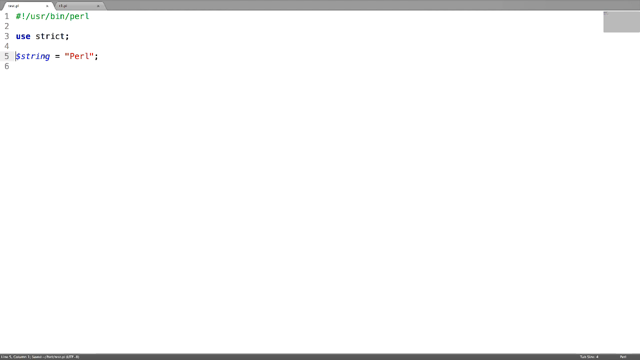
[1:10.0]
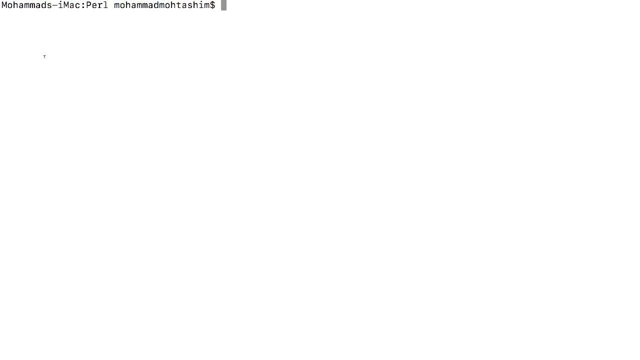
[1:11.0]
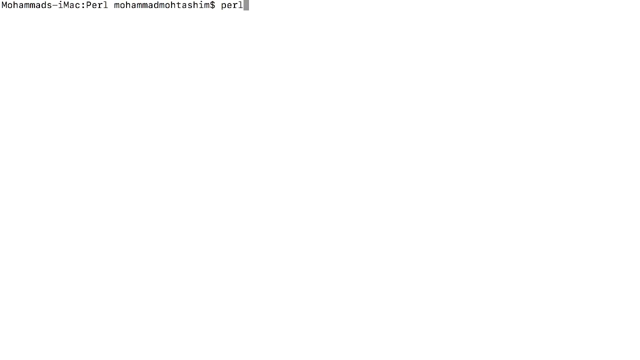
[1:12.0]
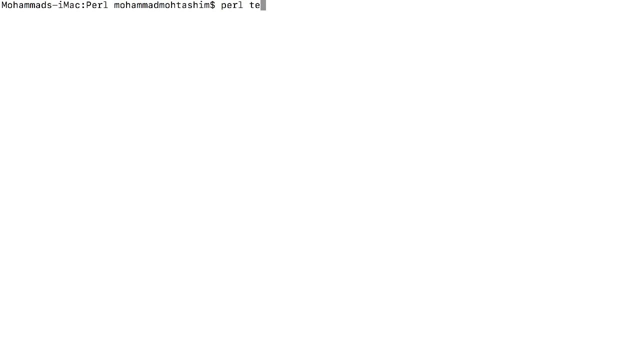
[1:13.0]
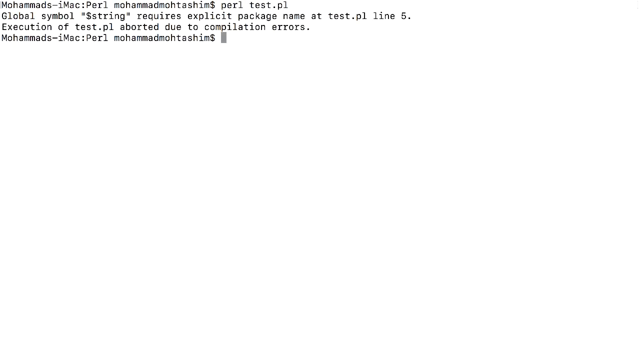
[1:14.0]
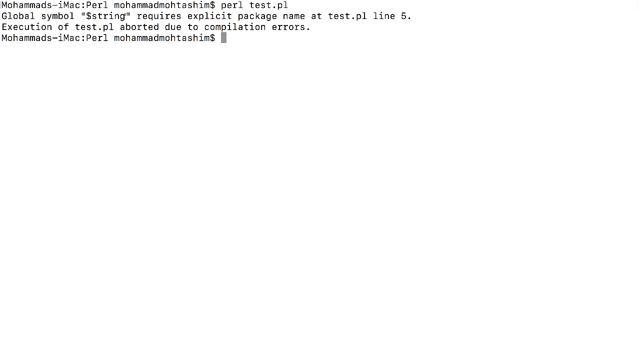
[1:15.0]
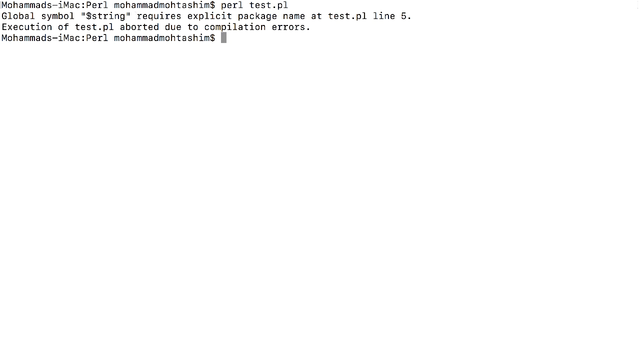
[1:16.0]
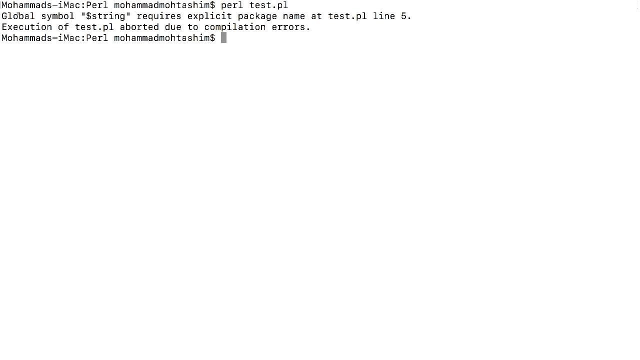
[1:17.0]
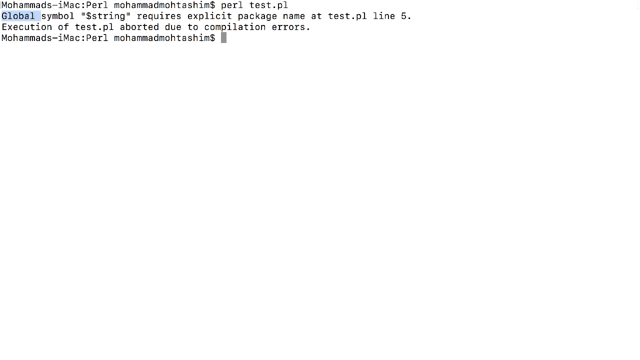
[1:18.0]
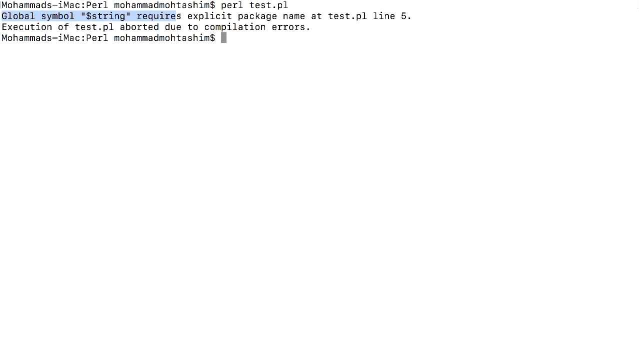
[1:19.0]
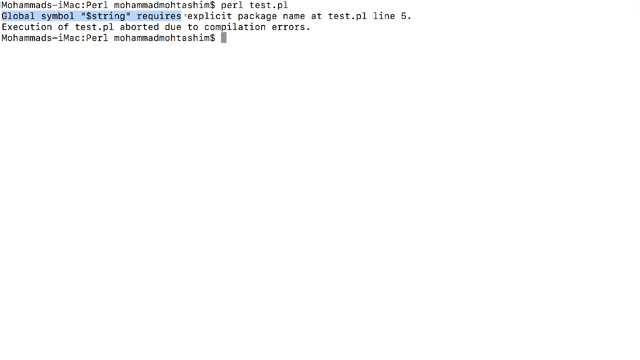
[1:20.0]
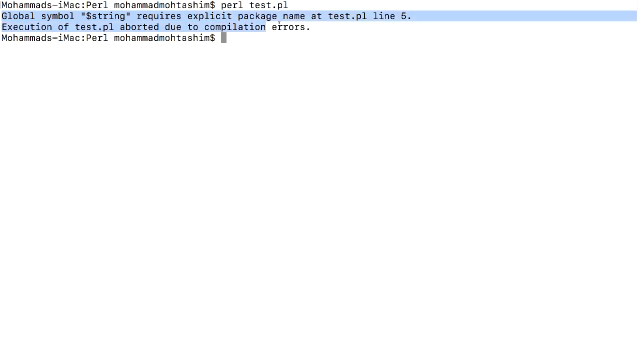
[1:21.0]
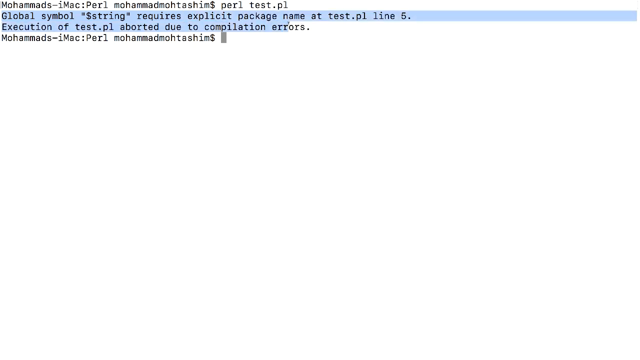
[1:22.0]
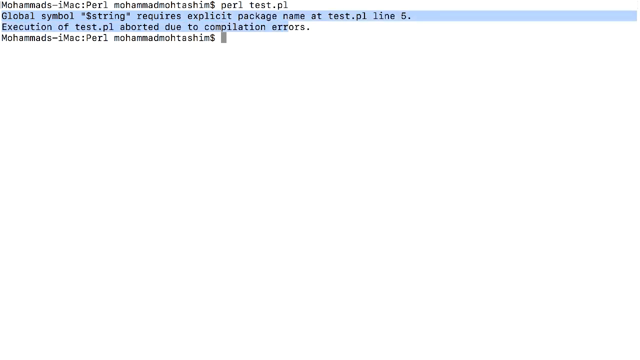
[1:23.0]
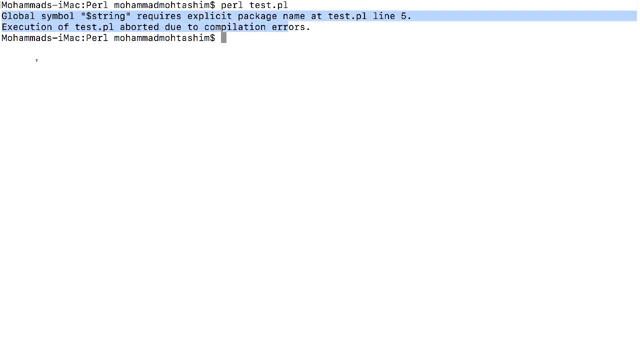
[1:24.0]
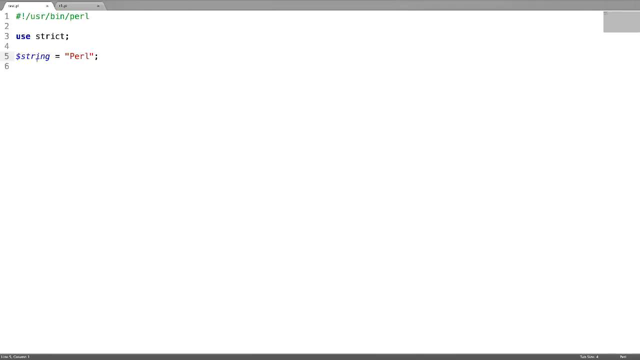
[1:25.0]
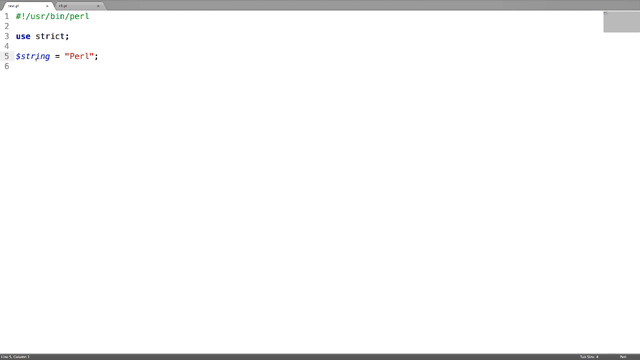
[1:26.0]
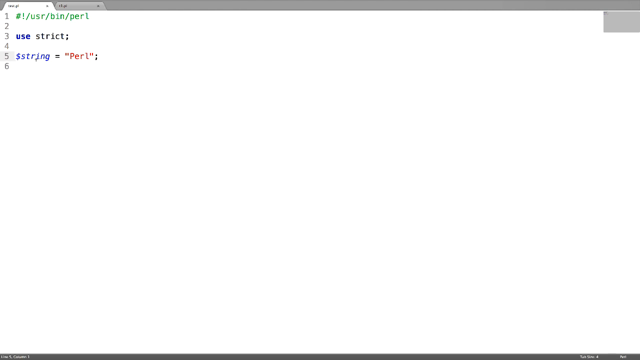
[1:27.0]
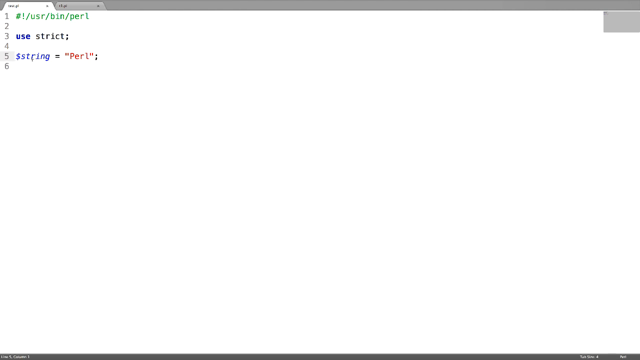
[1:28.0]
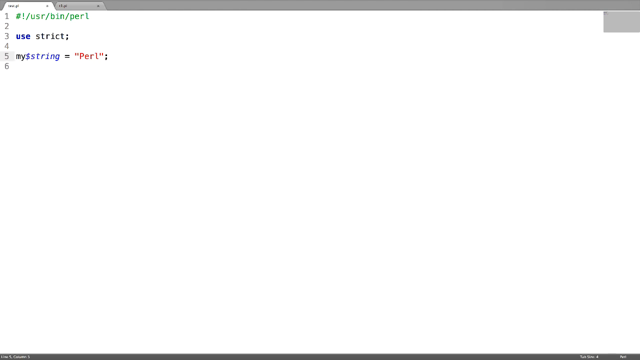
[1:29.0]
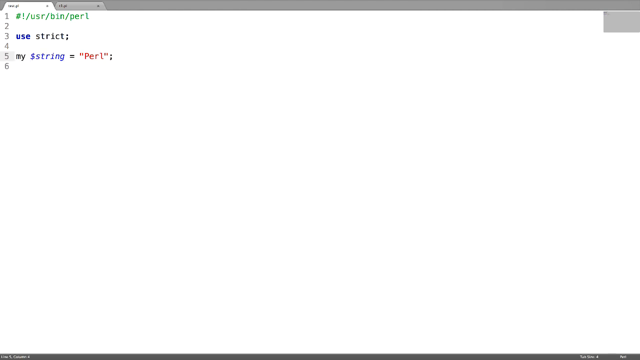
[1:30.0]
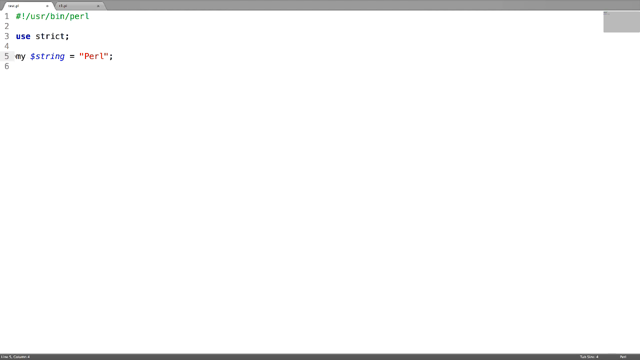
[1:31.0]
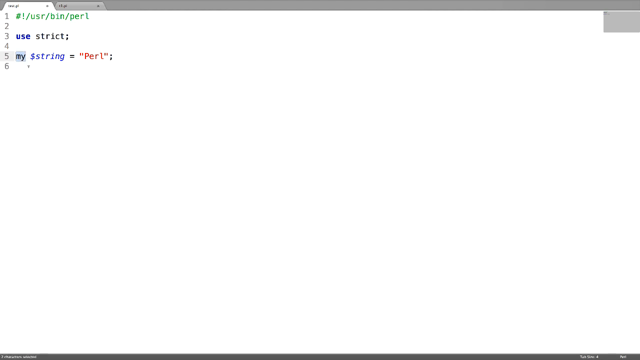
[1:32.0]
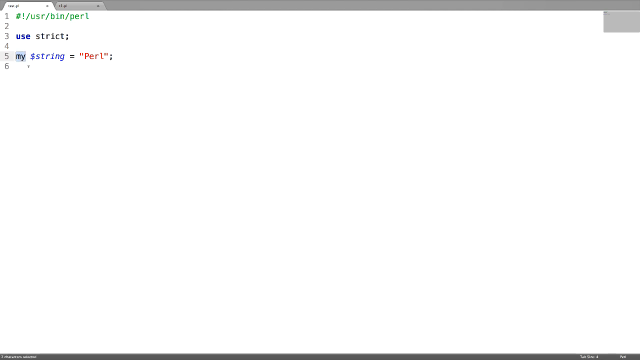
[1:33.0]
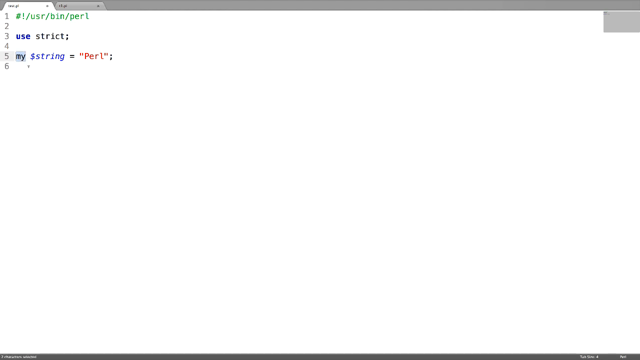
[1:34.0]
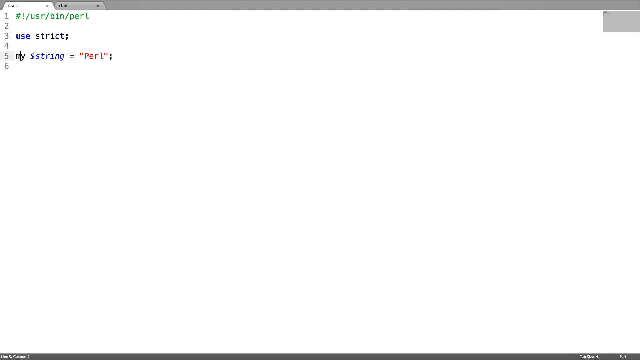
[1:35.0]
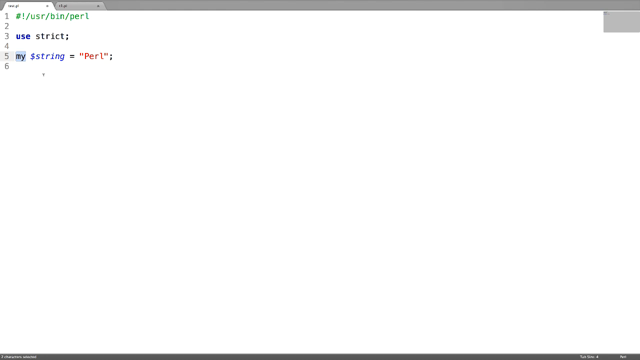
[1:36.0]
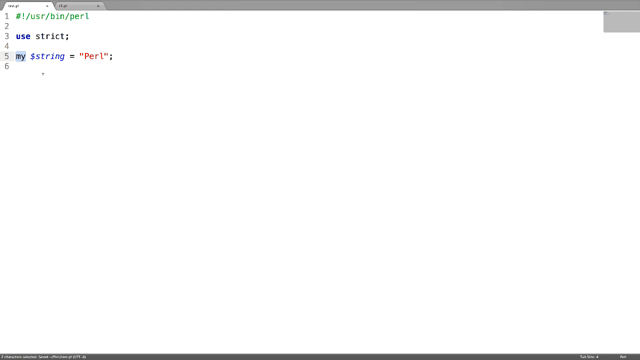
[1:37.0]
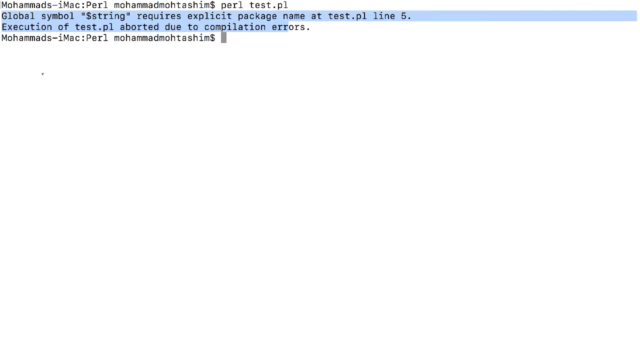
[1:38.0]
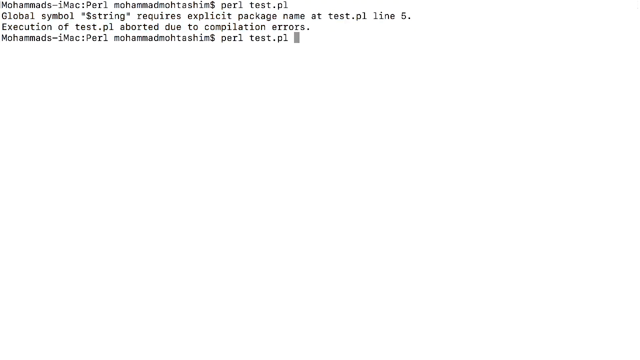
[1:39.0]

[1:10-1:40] The view changes to a computer monitor screen. A gray bar runs across the very top of the screen from left to right. Two tabs are open: the left tab is white and the tab to its right is gray. In the upper right corner, underneath a silver bar also in that corner, is a small gray square. The background is white with a gradient effect, the lower portion changing from white to gray to black at the very bottom. In the left corner, the numbers 1, 2, 3, 4, 5, 6 are written in a column.